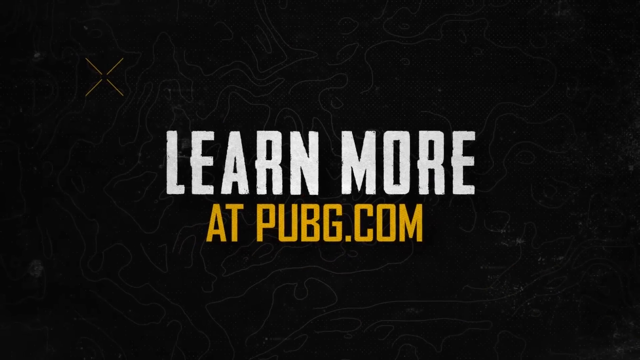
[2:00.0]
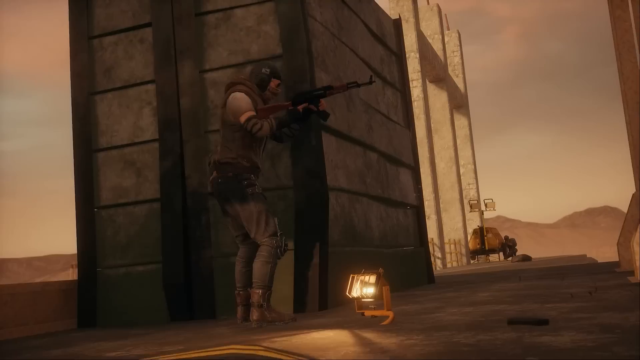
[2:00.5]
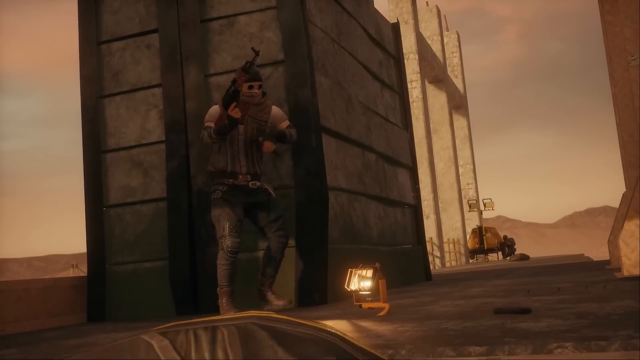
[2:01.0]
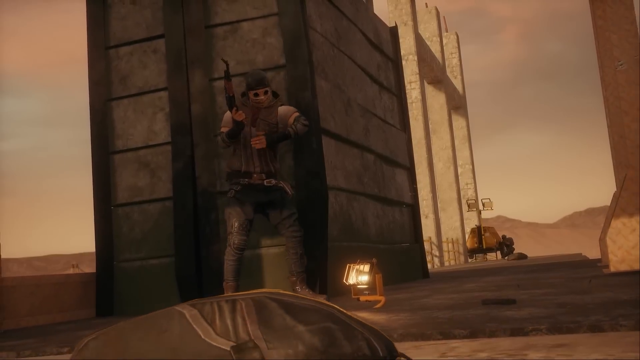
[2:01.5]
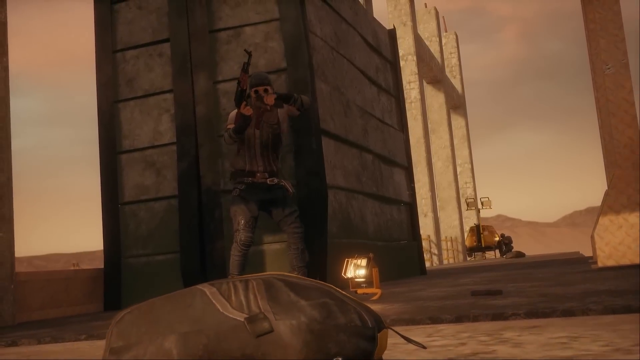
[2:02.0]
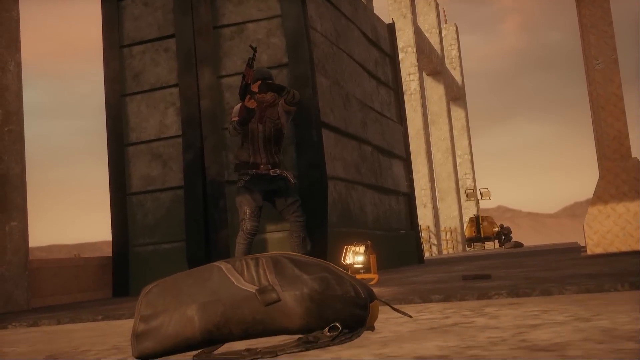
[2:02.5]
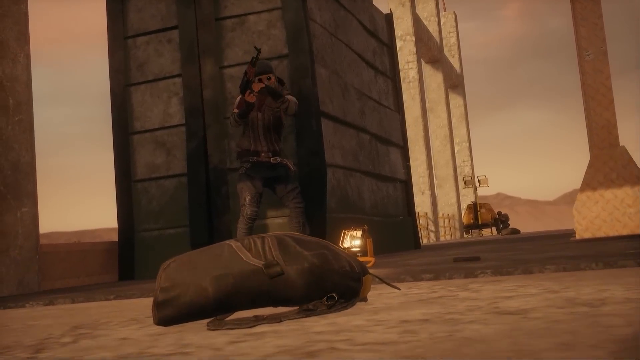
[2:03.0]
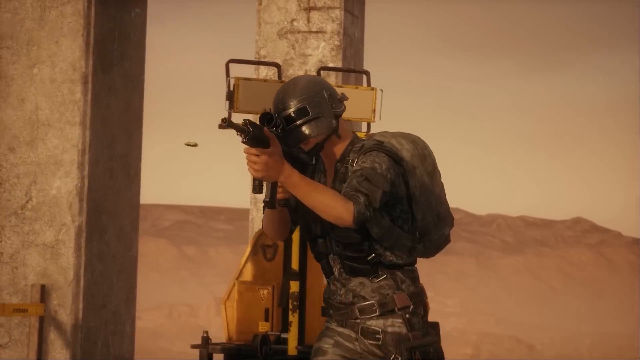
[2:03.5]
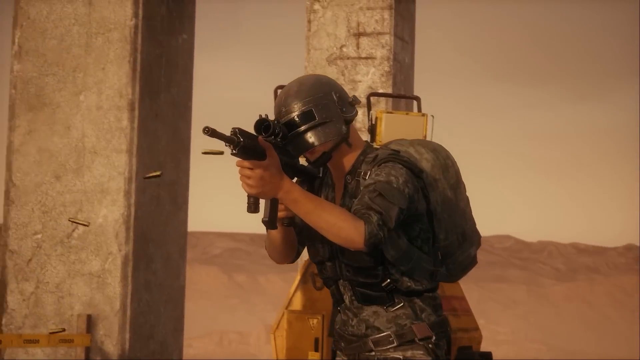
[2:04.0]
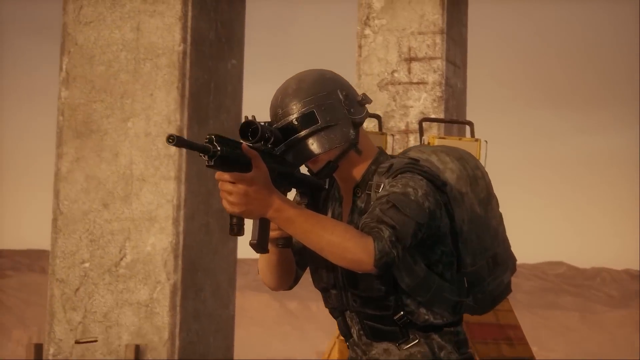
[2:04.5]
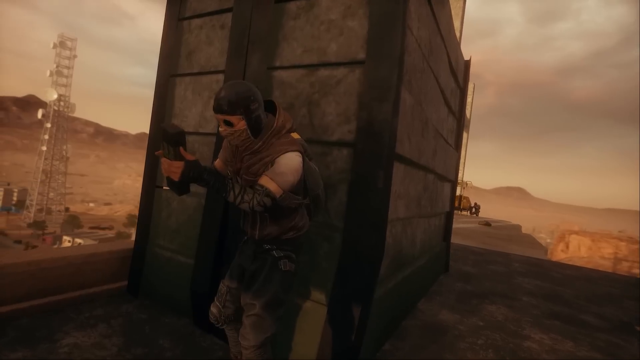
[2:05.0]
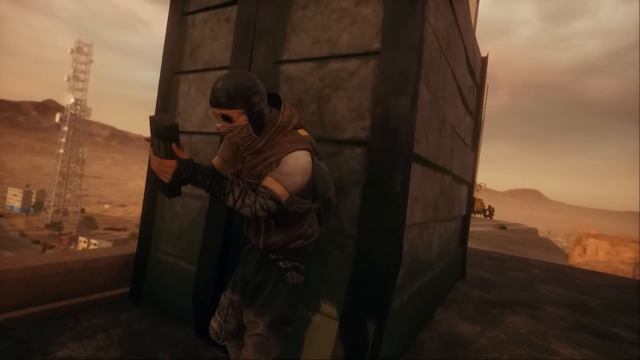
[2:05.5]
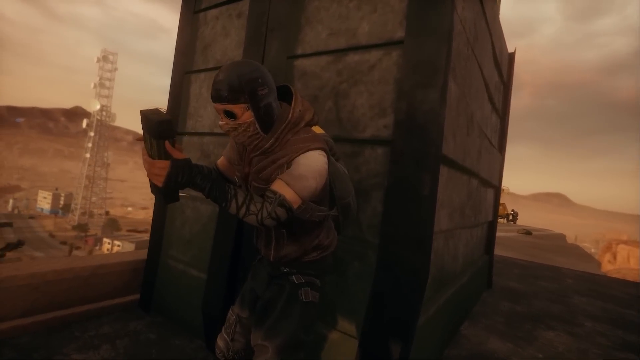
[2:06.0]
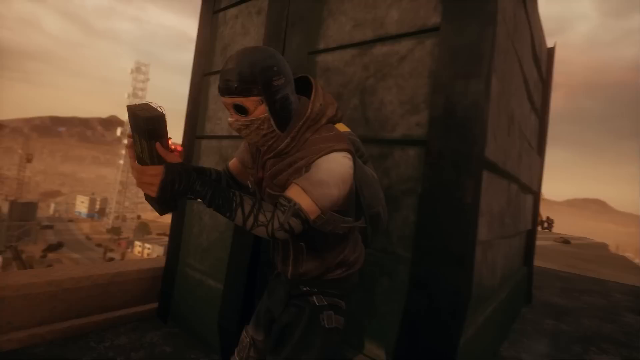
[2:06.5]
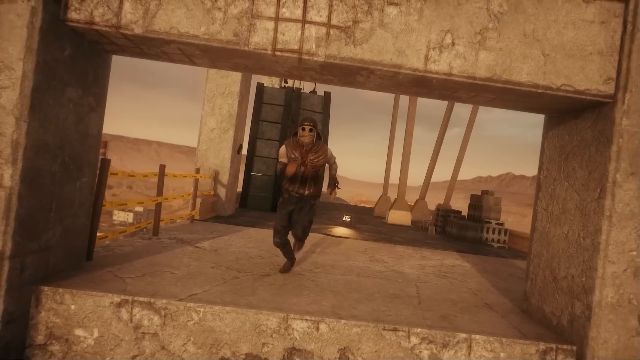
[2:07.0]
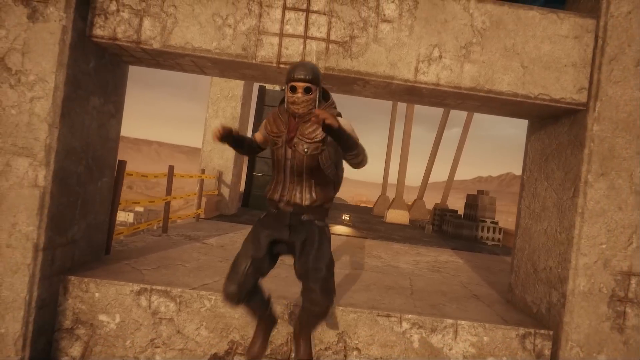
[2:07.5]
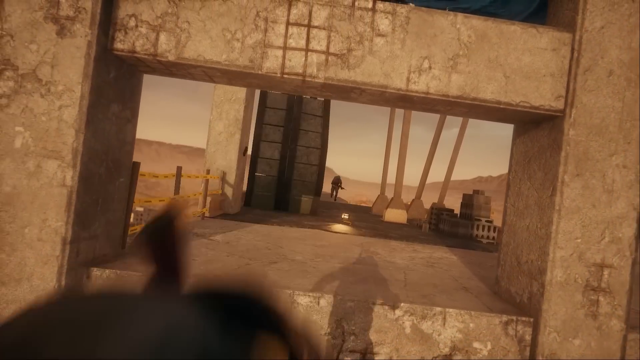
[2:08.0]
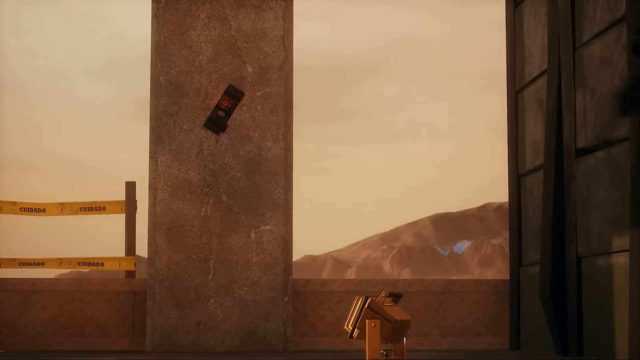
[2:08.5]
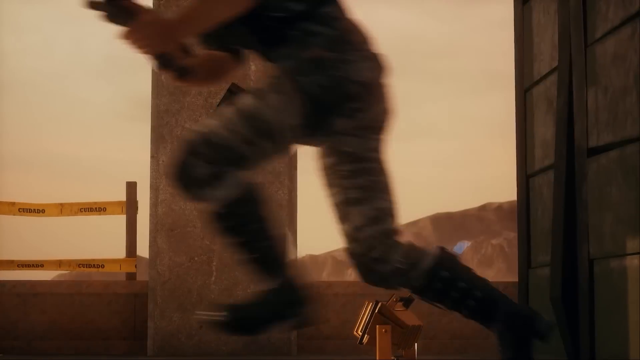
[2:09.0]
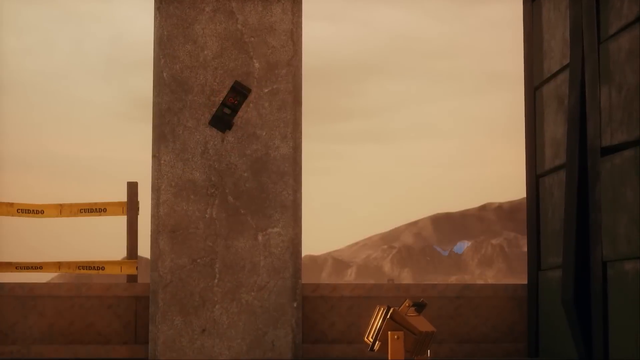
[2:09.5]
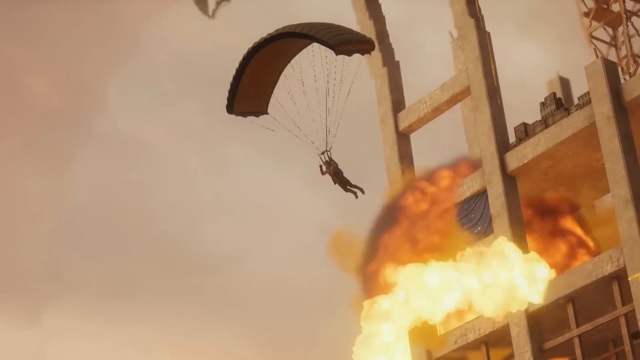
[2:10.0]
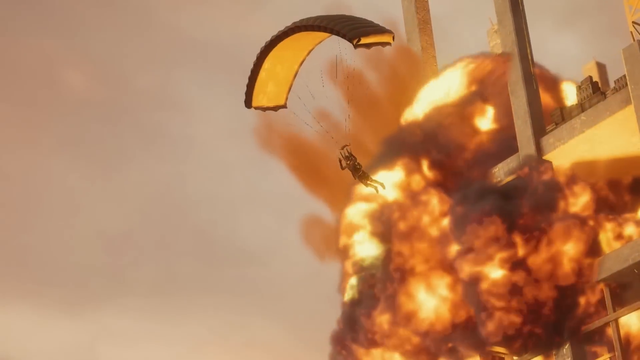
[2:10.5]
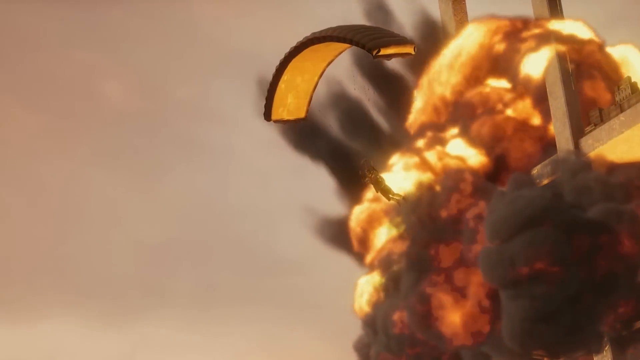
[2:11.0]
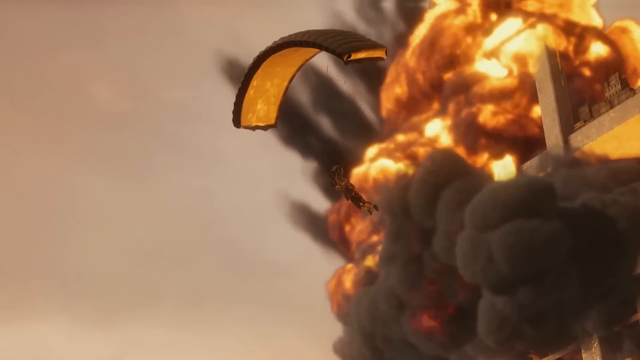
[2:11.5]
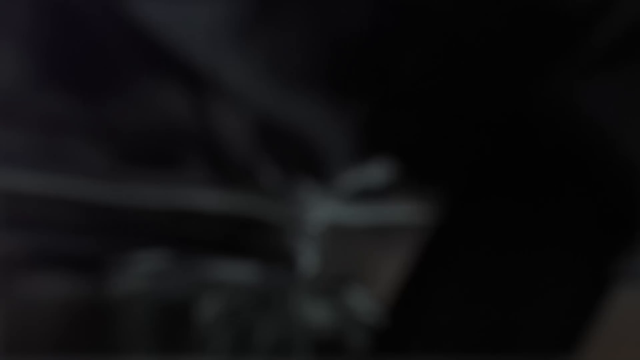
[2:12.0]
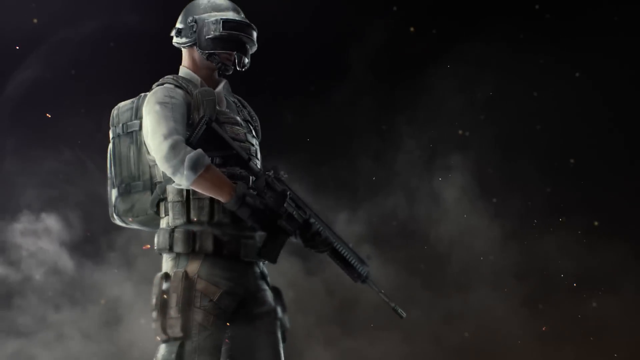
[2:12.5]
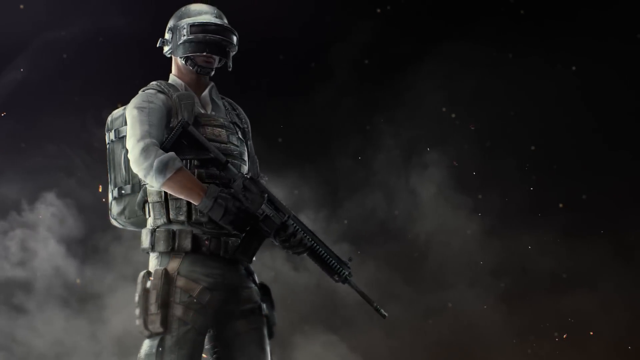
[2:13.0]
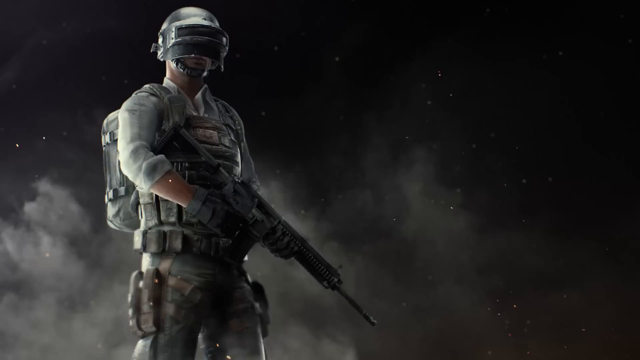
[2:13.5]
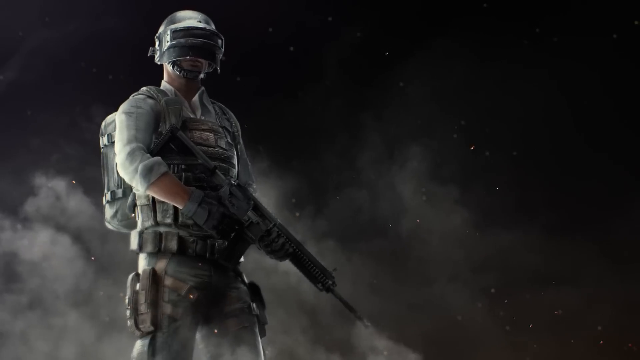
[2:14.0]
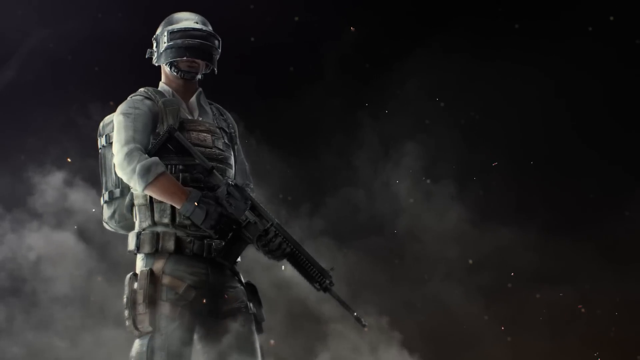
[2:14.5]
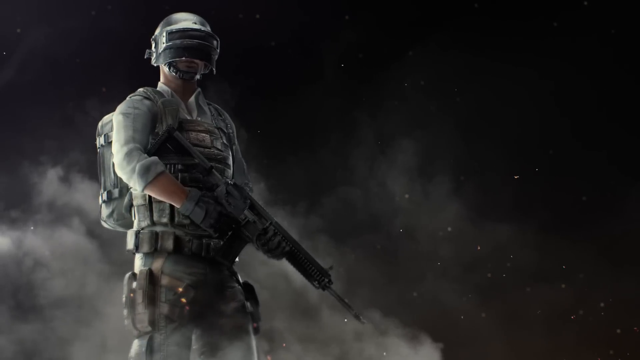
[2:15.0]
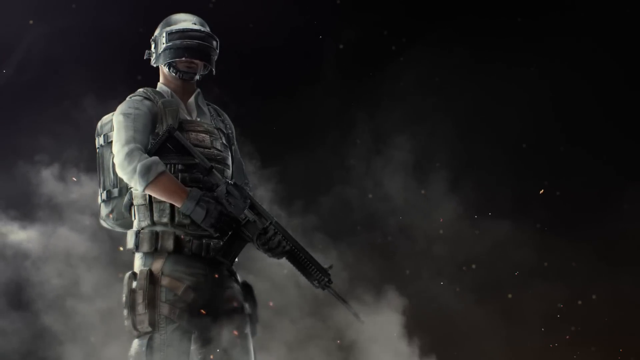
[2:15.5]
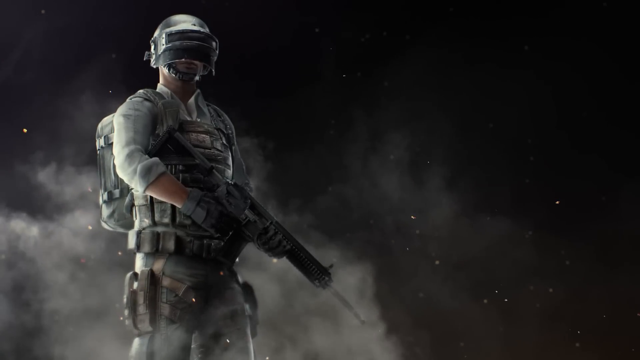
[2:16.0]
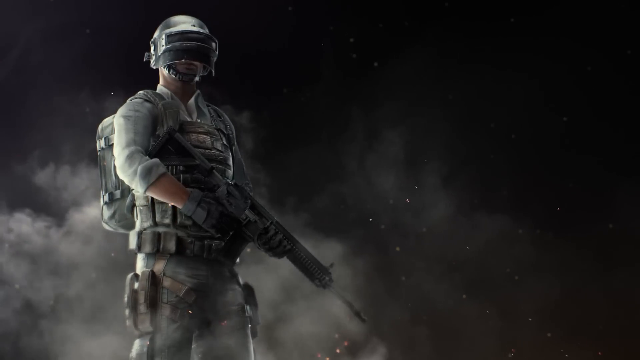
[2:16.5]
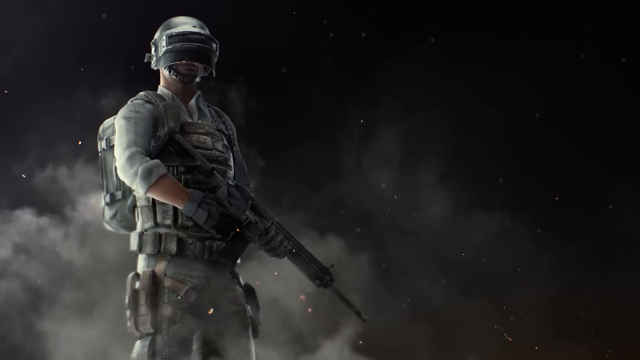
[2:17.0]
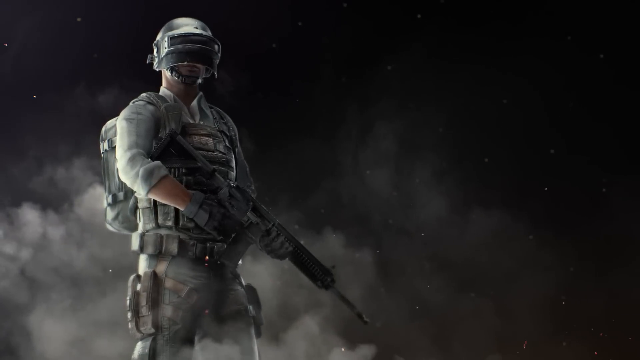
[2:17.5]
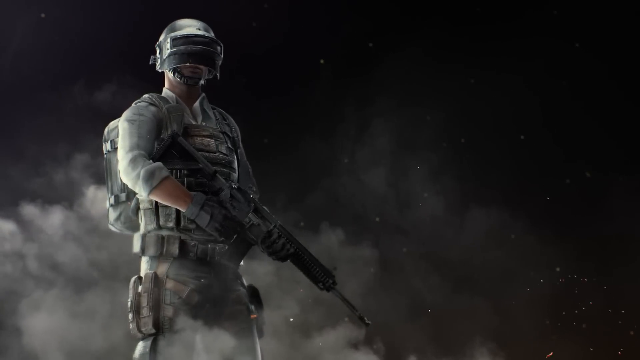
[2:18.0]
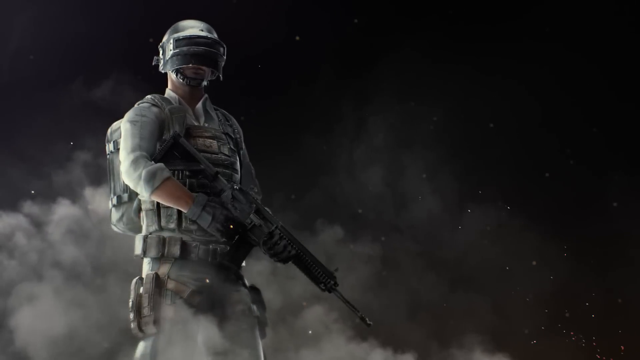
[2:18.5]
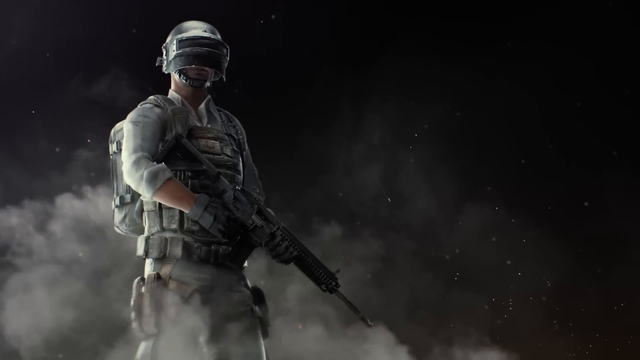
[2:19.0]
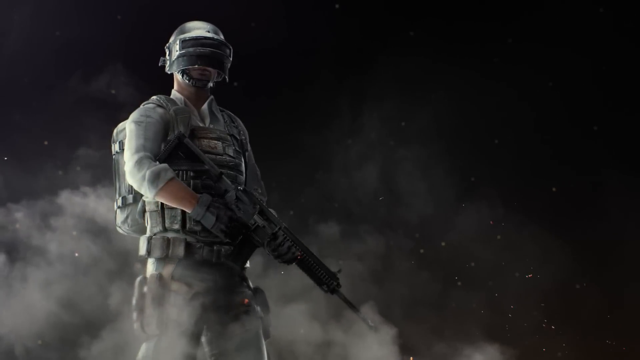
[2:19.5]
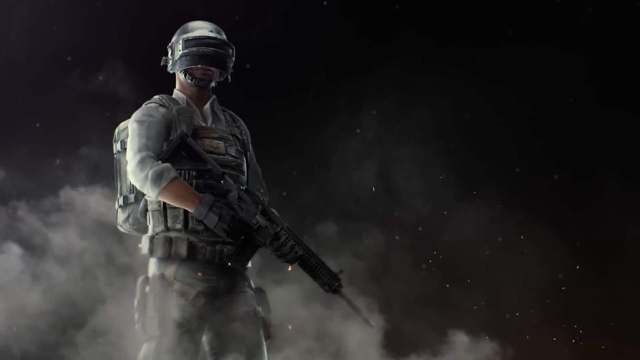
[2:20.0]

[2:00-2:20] After the black screen reading "learn more" disappears, a man with a gun is fighting, hiding behind some sort of grey brick wall and reloading his gun, with a bag laid out in front of him. Another player is then shown with the camera to his left as he slowly creeps forward, firing his gun at someone or something. The person in cover looks at some sort of machine and plants it on a wall; in the next image he parachutes off where he was standing as the building behind him explodes into orange and yellow flames, with grey smoke billowing everywhere. The screen then goes black and a model of one of the characters is shown, standing to the left of the screen with white smoke and sparks behind him. The only movement is him moving slightly as he breathes.